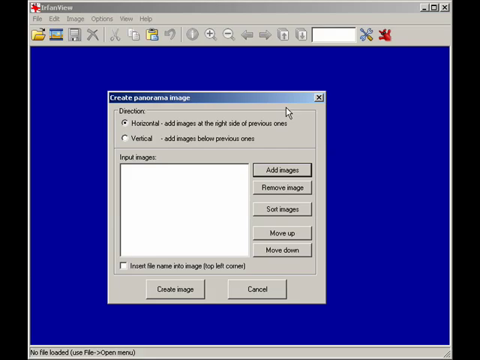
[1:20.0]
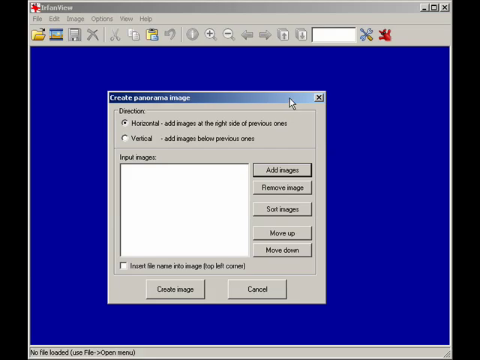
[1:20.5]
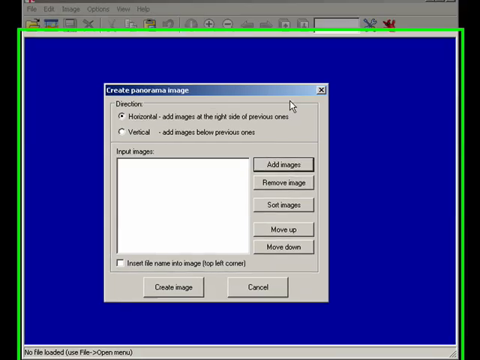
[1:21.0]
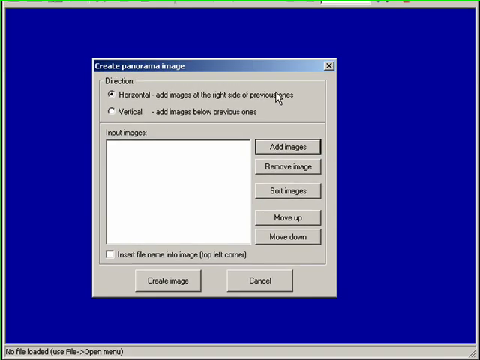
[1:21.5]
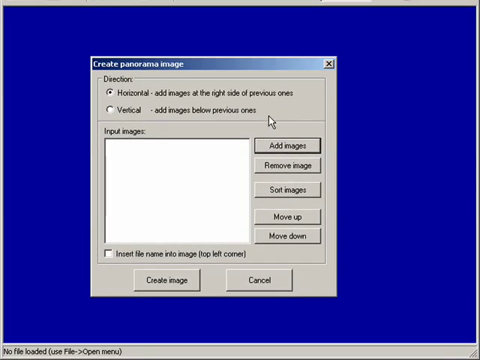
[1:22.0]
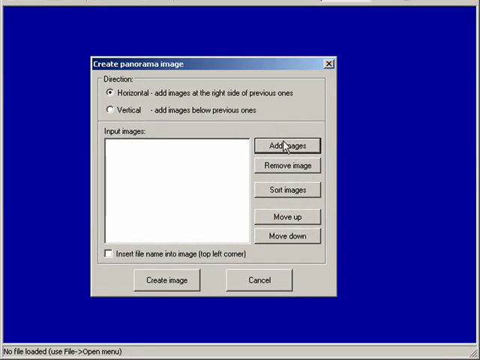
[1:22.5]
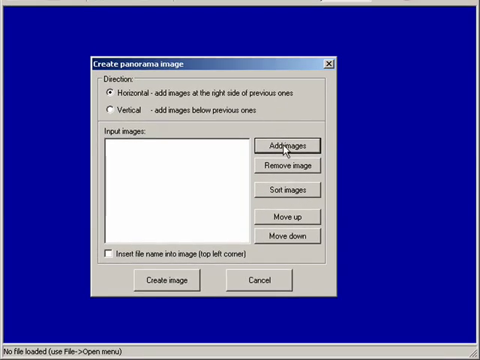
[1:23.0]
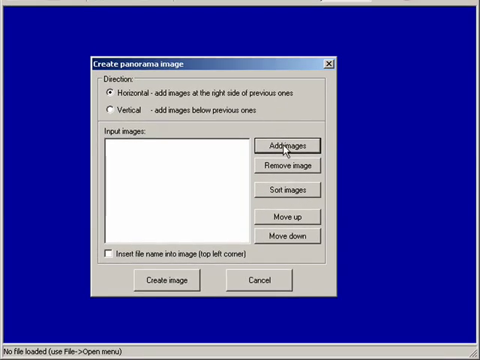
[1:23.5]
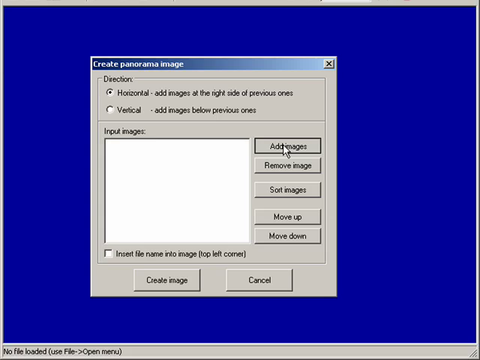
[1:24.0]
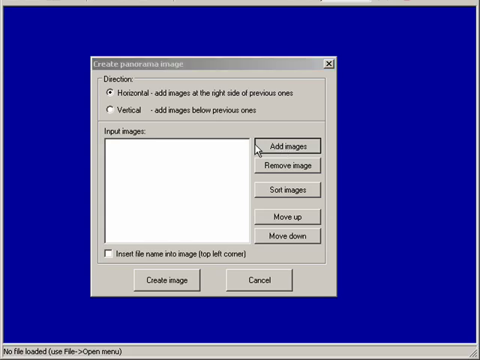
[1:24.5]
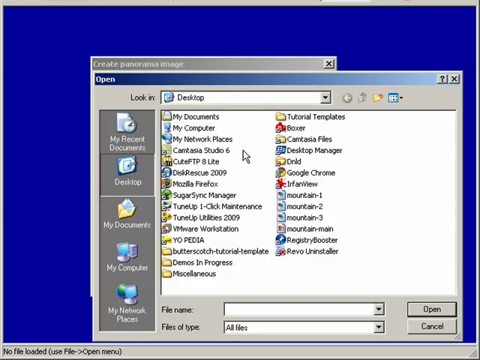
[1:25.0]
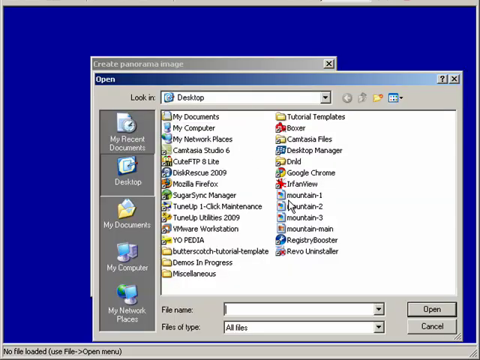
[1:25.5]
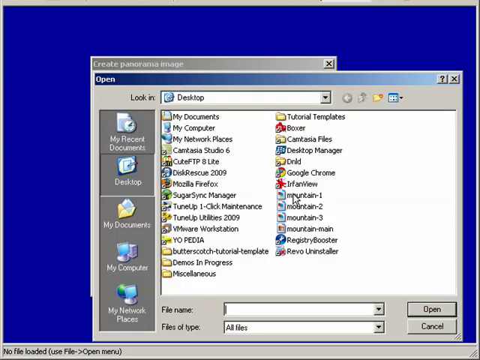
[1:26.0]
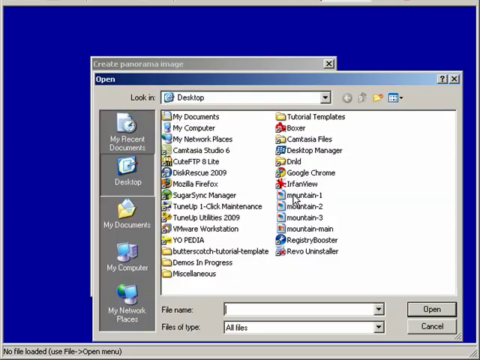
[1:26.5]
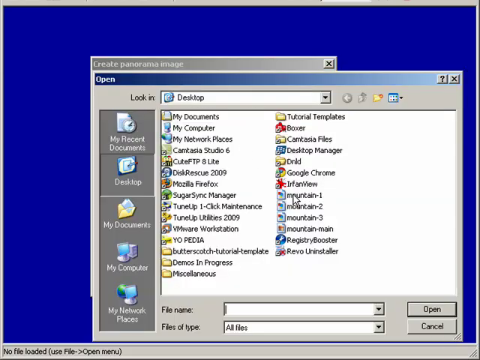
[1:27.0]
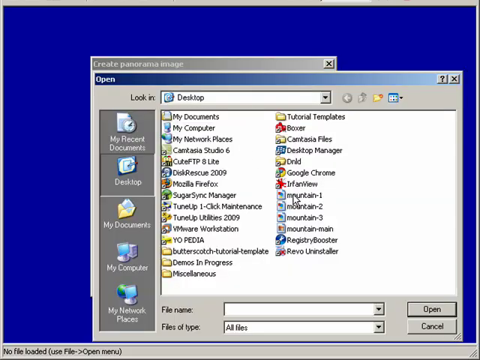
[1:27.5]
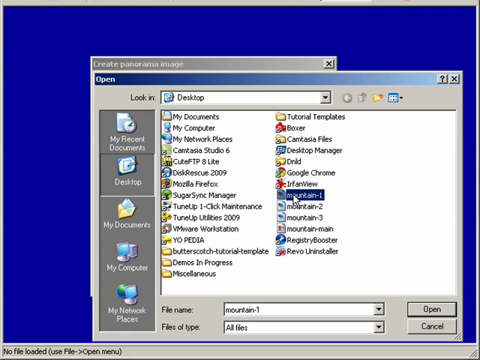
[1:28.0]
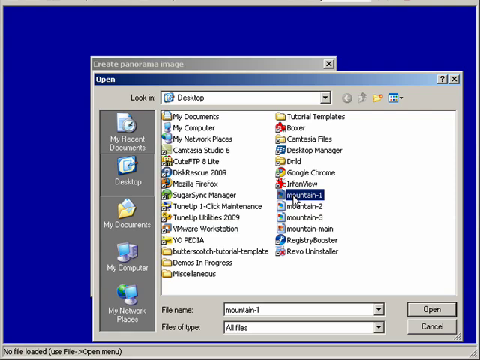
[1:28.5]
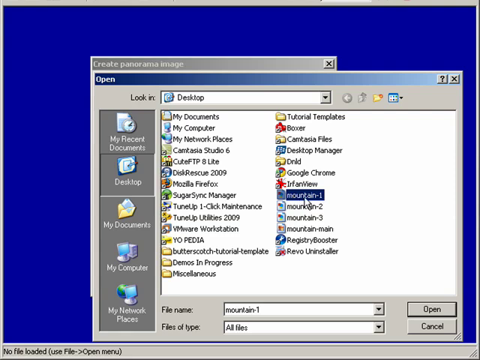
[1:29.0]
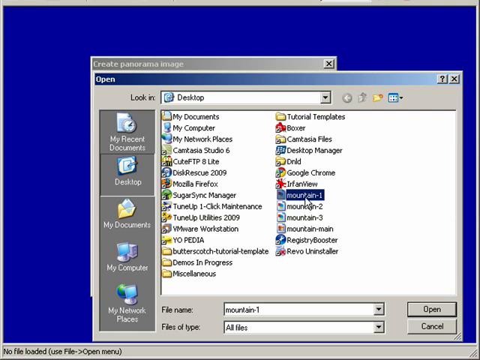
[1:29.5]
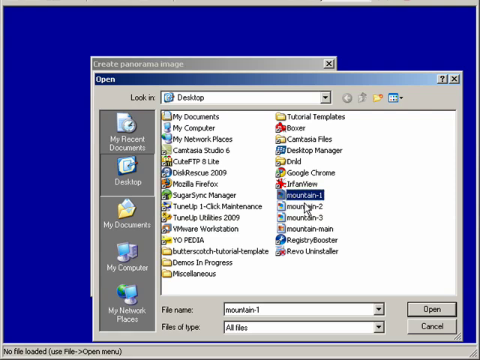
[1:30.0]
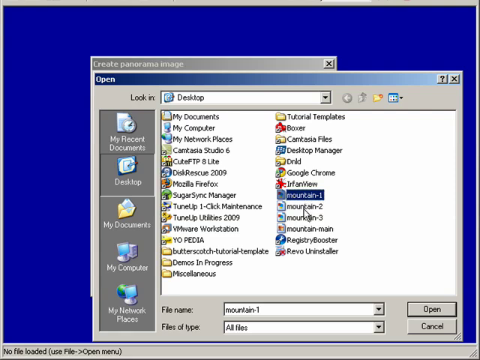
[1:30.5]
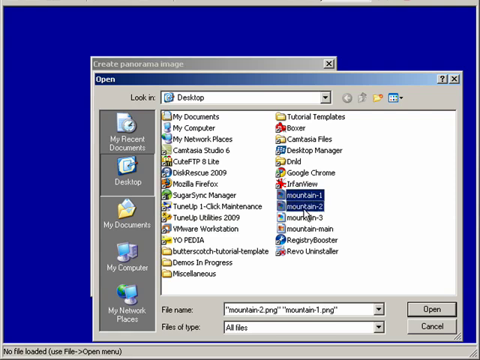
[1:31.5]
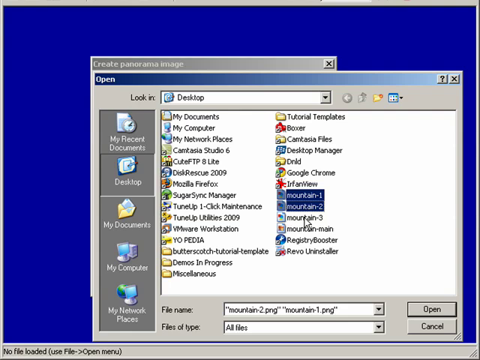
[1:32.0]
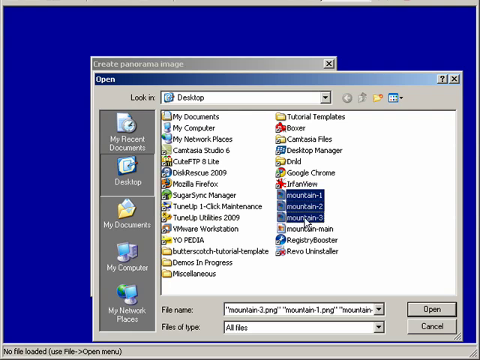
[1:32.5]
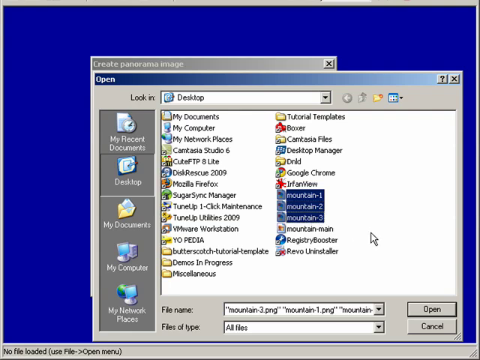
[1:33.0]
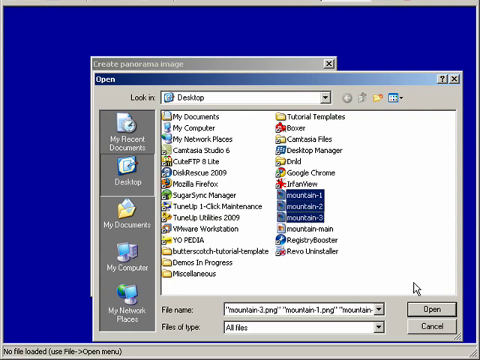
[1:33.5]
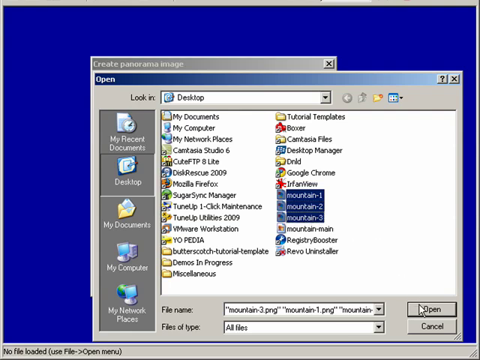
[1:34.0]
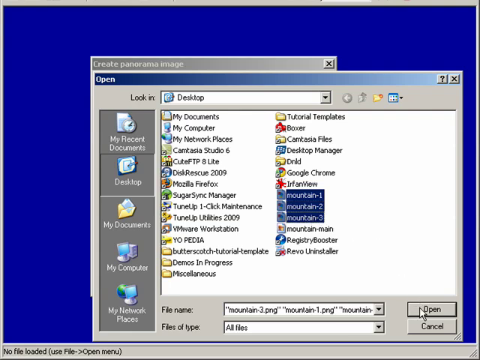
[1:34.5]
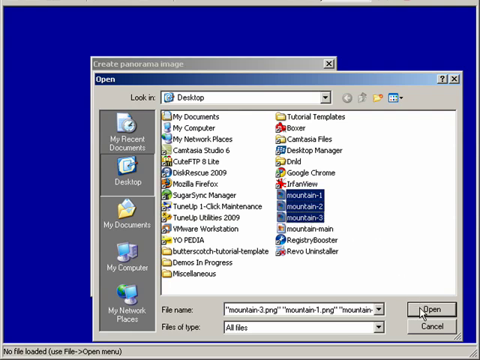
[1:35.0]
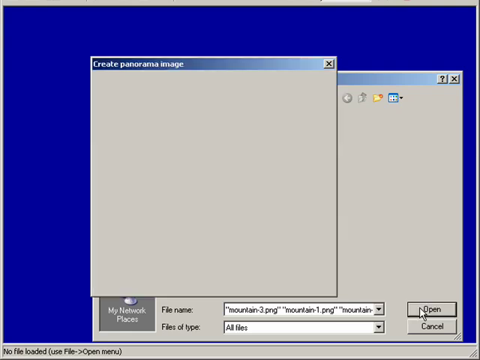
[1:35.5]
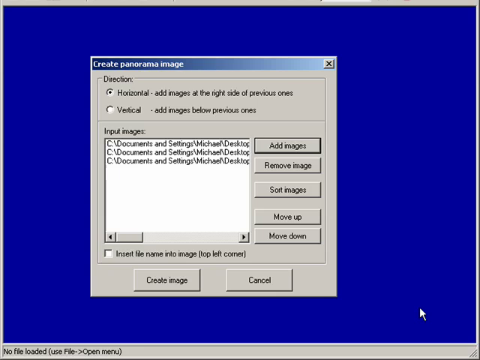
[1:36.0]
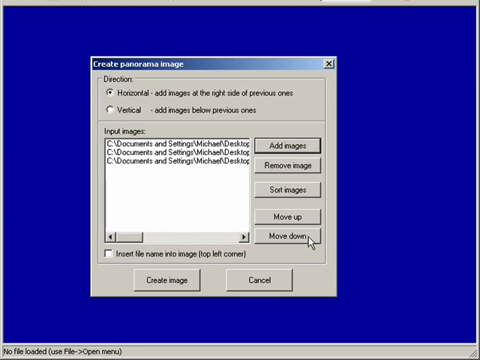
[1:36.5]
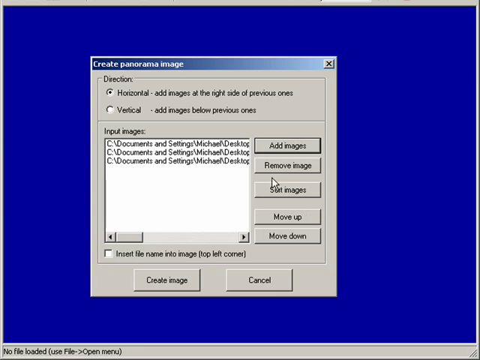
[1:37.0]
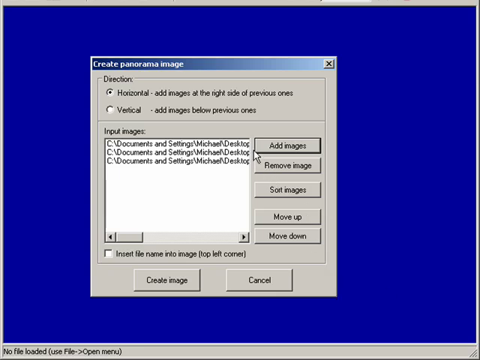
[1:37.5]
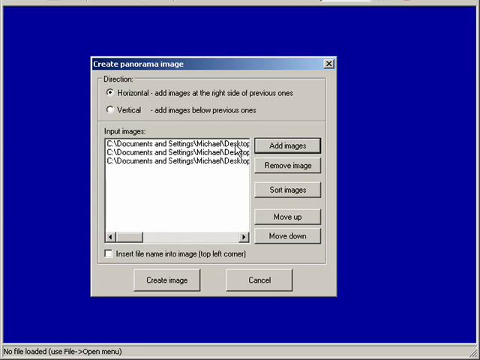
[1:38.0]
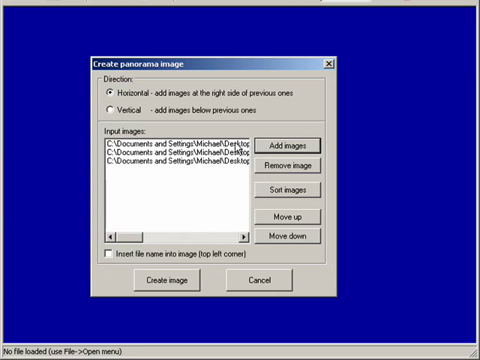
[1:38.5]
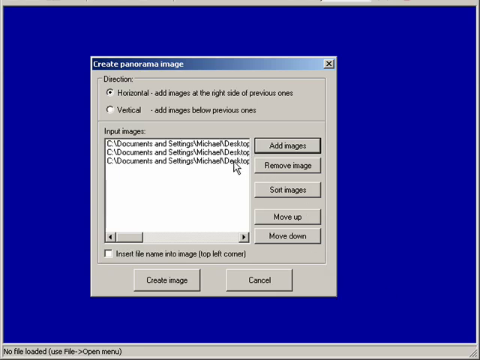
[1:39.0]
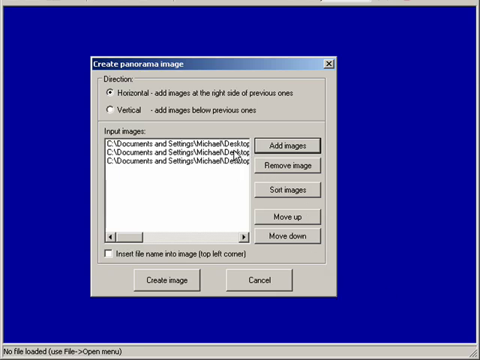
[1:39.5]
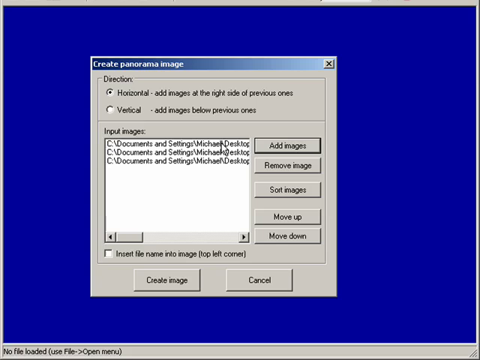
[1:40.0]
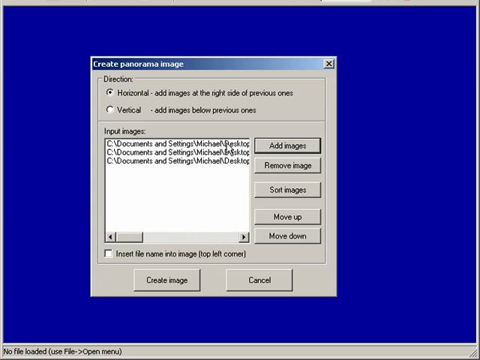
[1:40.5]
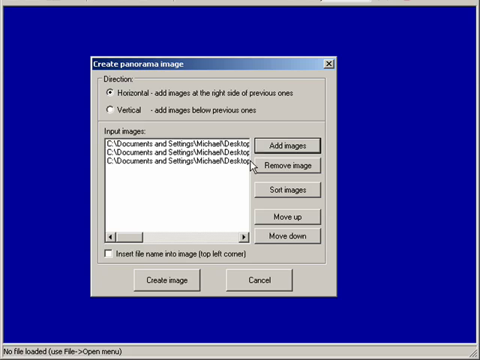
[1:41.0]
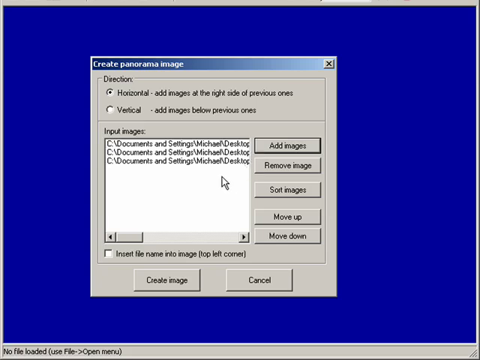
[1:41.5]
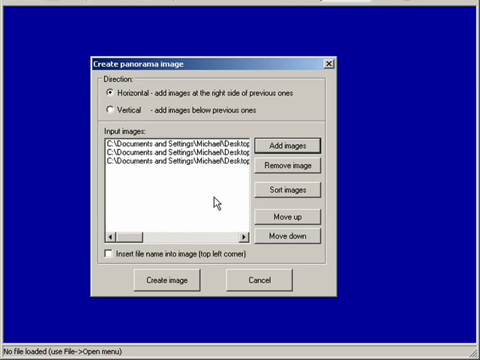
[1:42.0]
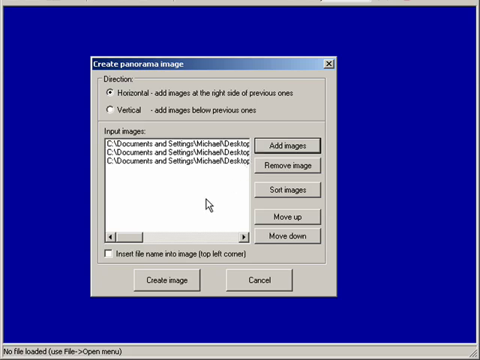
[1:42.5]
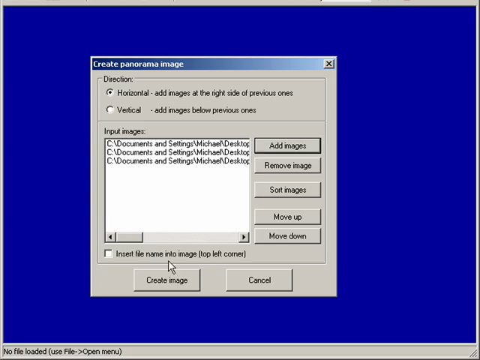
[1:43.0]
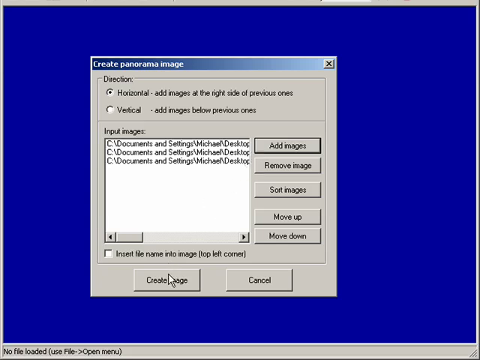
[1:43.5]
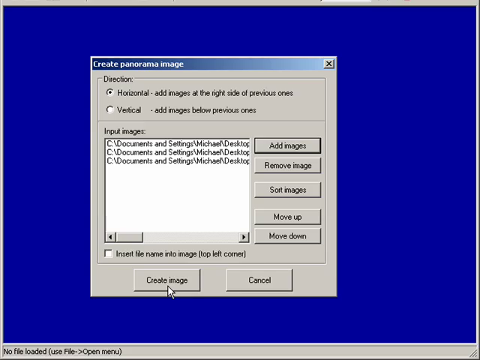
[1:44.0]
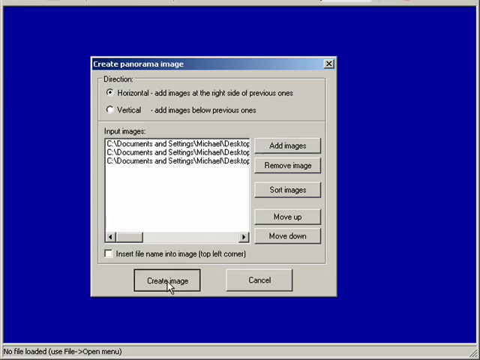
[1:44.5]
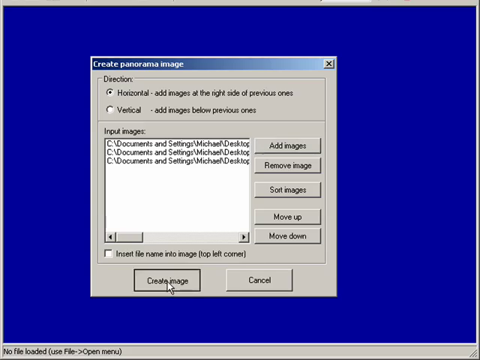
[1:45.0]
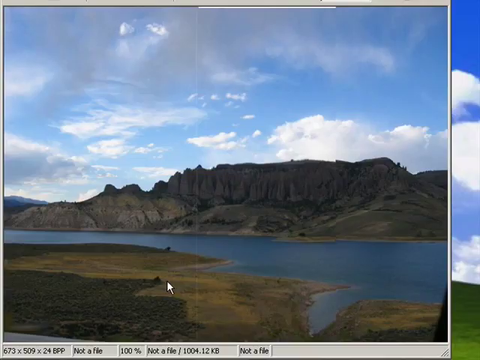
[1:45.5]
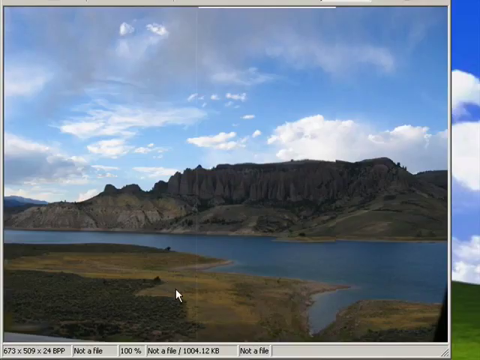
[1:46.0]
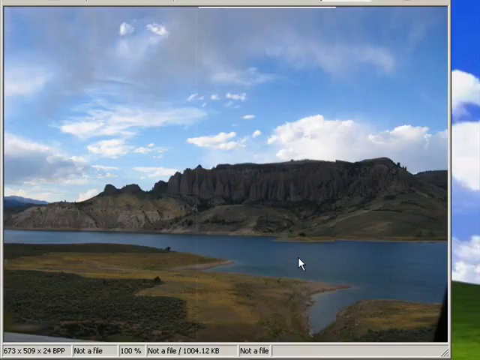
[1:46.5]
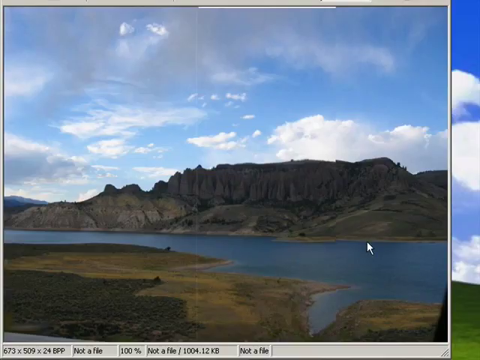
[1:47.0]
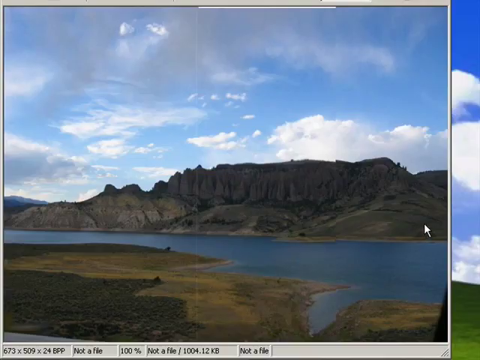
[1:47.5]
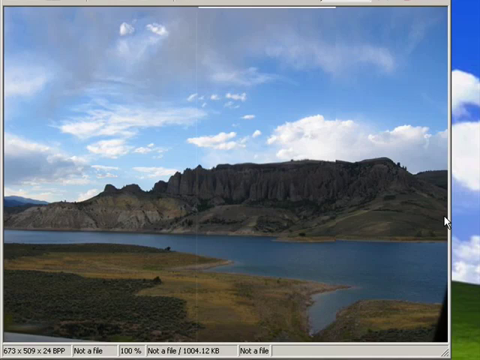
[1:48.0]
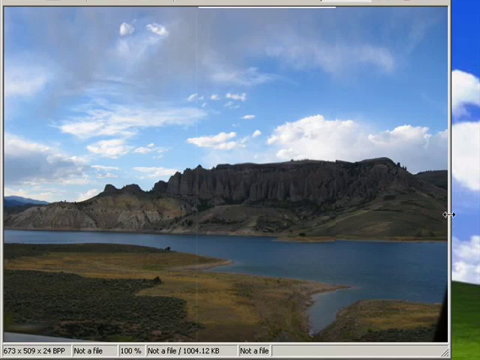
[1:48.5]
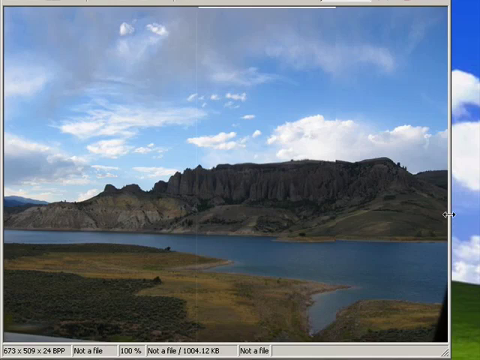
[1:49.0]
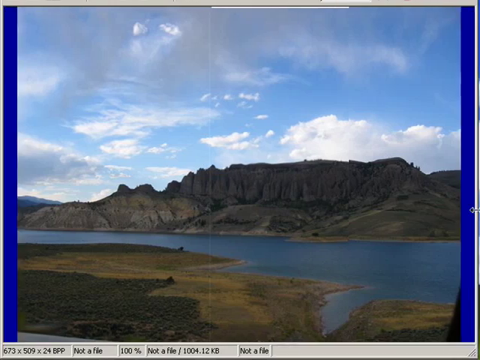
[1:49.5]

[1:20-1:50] The man zooms in again on the create panoramic image box in the middle, which has a green border as before, showing the header and some of the buttons; the images get distorted for a second. He clicks add images and an open dialog box pops up. It has two columns including my documents, my computer and a few others. On the left are icons: one with a clock and a document labeled "my recent documents", one with a pen and pencil labeled "desktop", plus "my documents" and "my computer". There is a file name text field with a cursor and a drop-down arrow, a file type drop-down, and on the right open and cancel buttons. He goes to the second column over "mountain-1" and clicks it once, which highlights it and changes the file name to "mountain-1". He then apparently holds down to highlight "mountain-1", "mountain-2" and "mountain-3" and clicks open. The create panorama image box returns, and underneath the white box there are apparently three C drive paths, a series of colons and backslashes with "documents and settings". He moves the arrow up and down over them, then goes down to where it says "create an image" and clicks. The result looks like the same image, but where the first image showed only the middle section, this one combines the left, middle and right sections into a complete picture of the nature scene, with a river or something running through it and a bluff behind it.